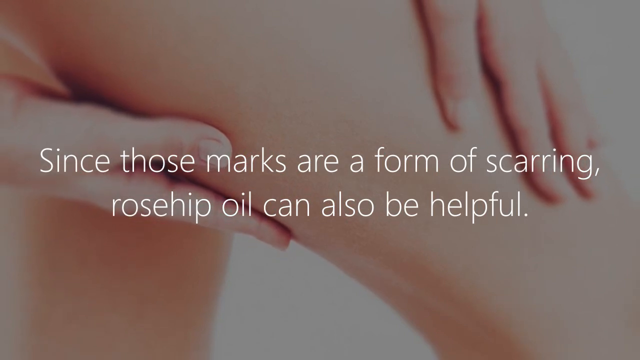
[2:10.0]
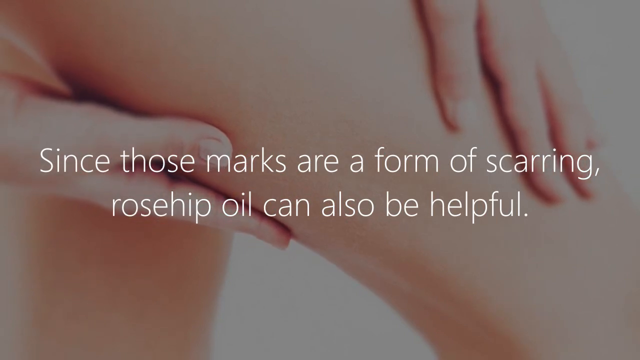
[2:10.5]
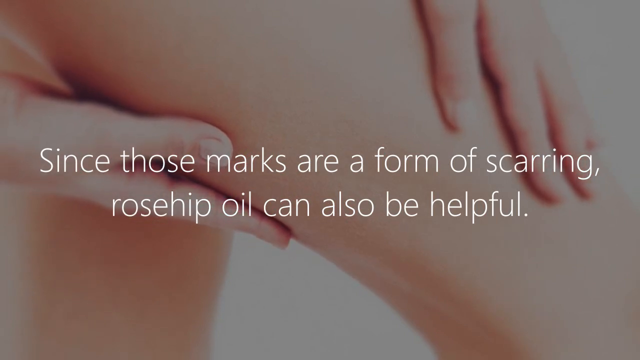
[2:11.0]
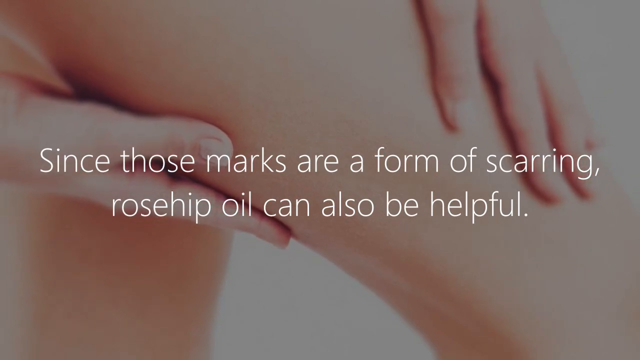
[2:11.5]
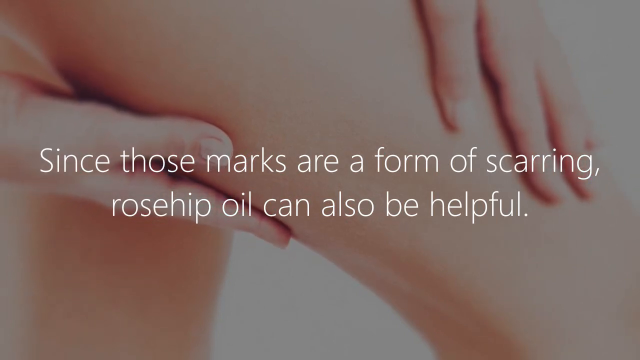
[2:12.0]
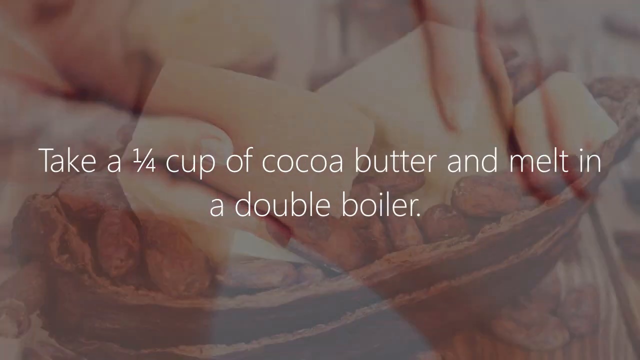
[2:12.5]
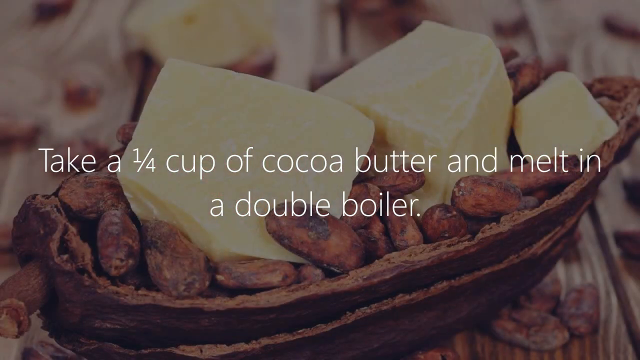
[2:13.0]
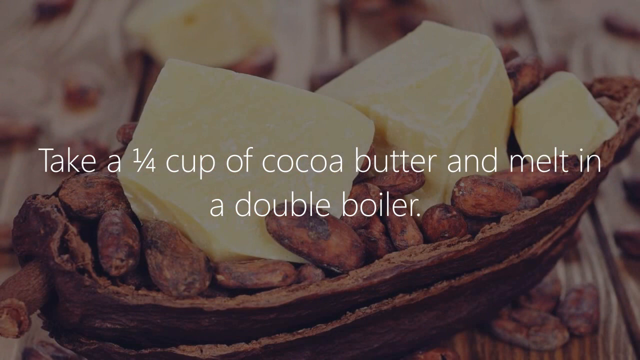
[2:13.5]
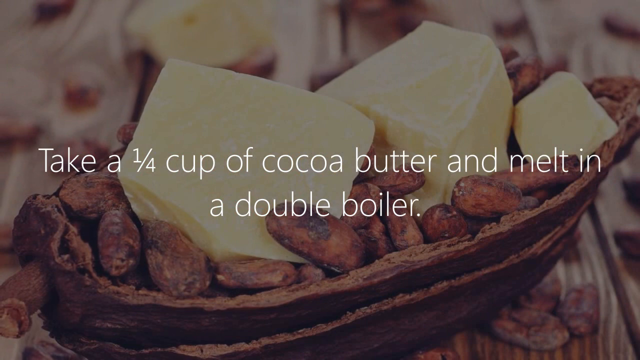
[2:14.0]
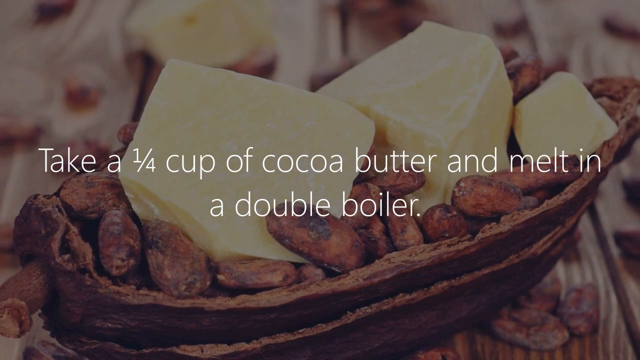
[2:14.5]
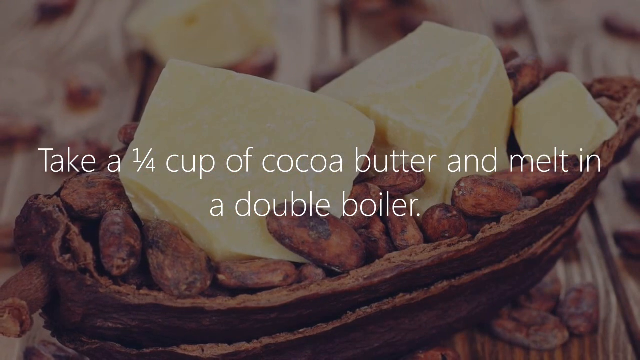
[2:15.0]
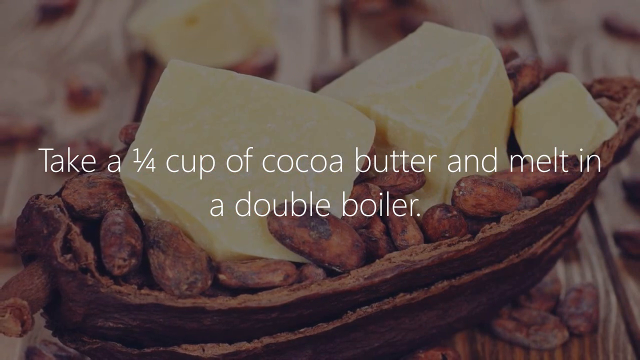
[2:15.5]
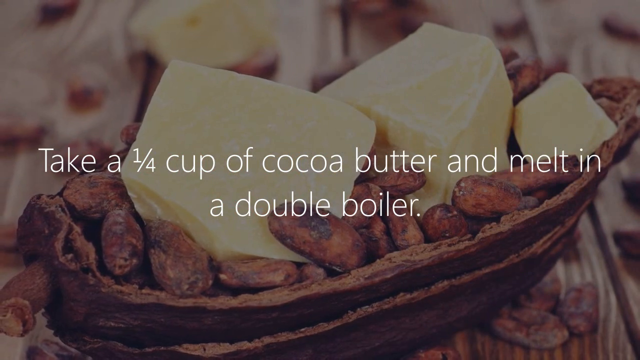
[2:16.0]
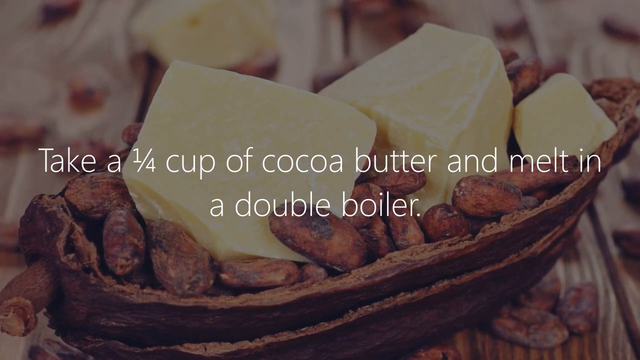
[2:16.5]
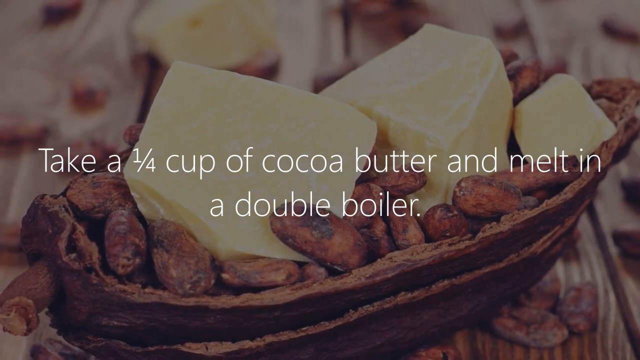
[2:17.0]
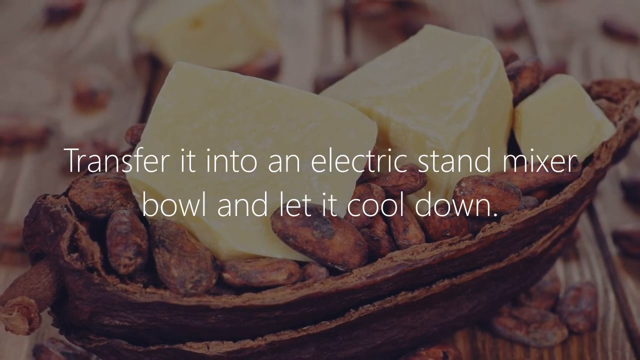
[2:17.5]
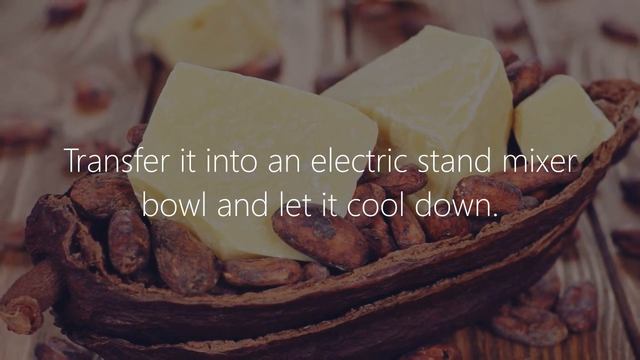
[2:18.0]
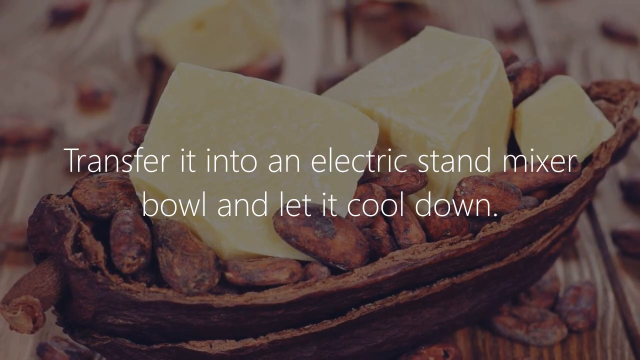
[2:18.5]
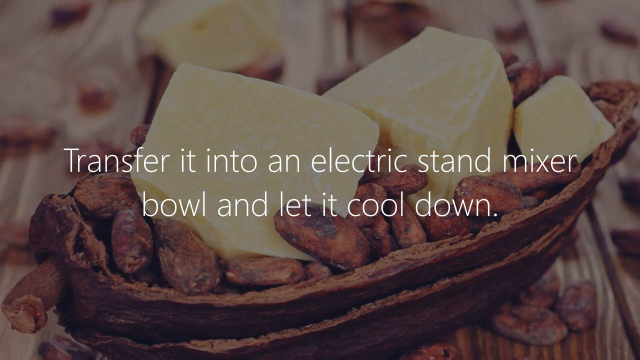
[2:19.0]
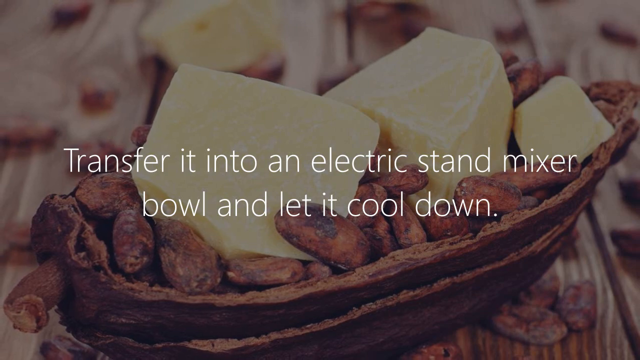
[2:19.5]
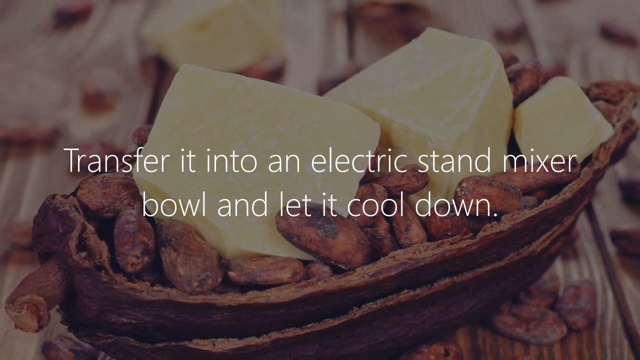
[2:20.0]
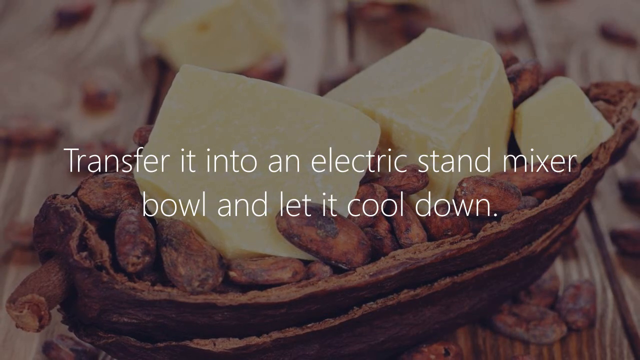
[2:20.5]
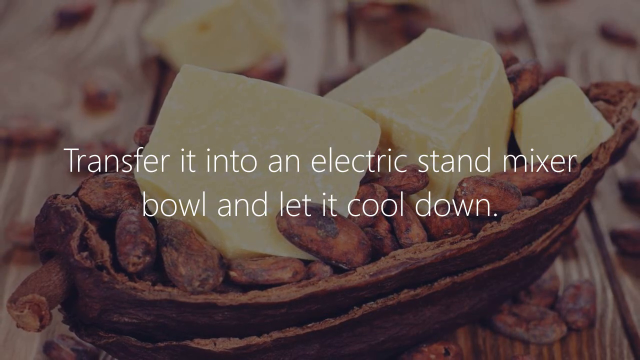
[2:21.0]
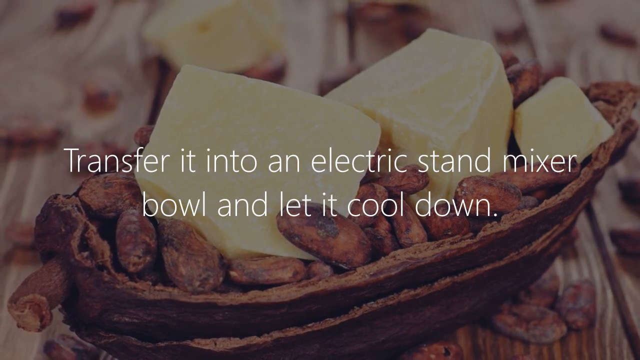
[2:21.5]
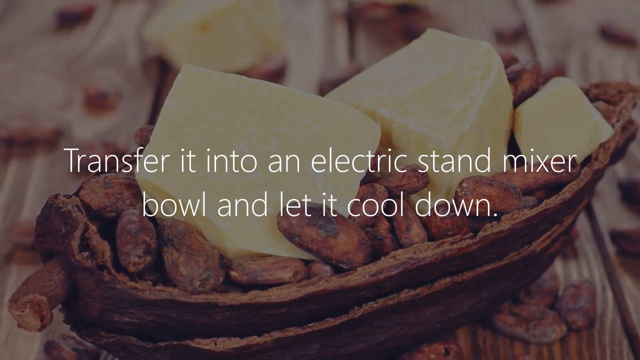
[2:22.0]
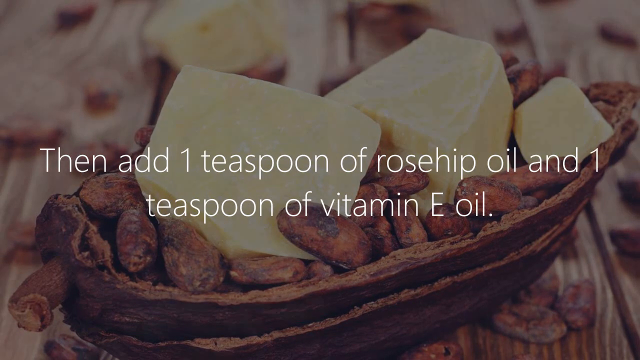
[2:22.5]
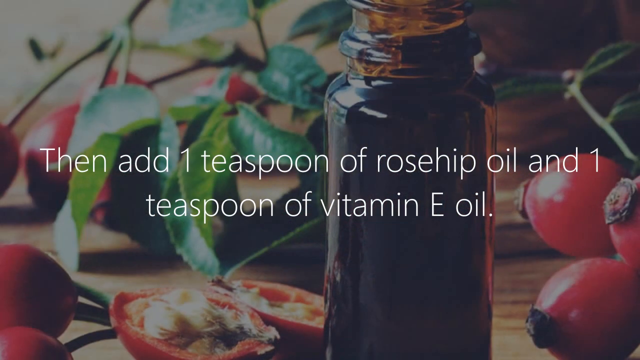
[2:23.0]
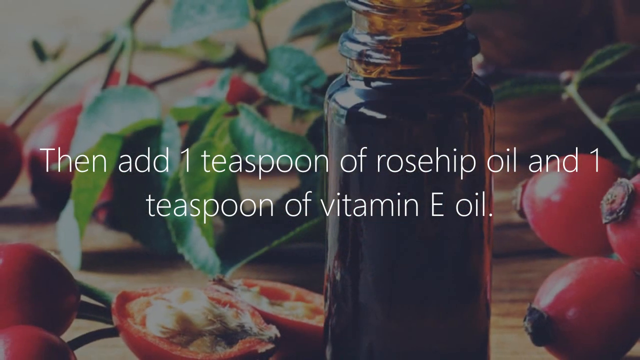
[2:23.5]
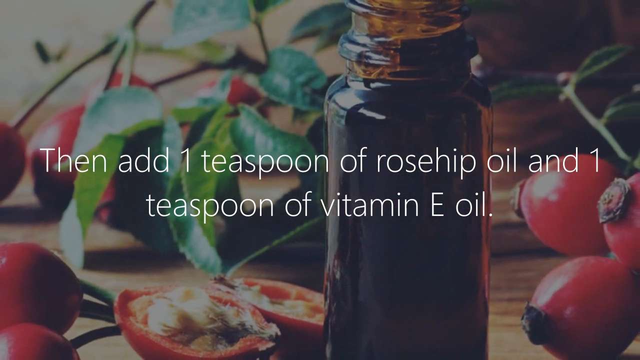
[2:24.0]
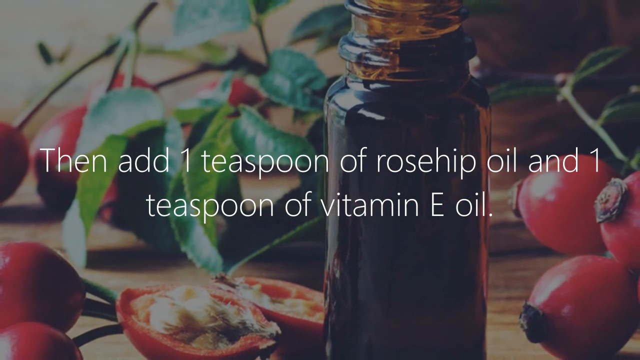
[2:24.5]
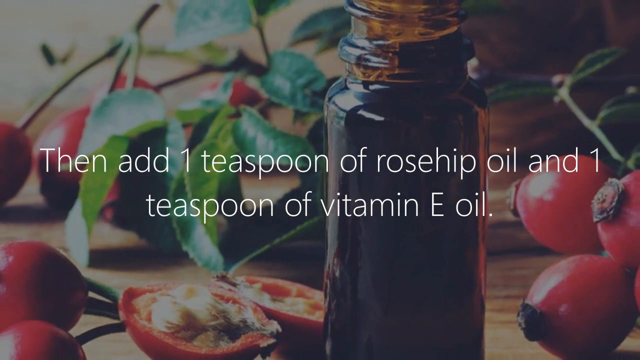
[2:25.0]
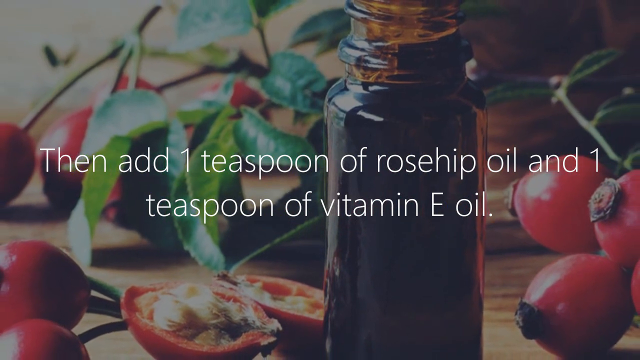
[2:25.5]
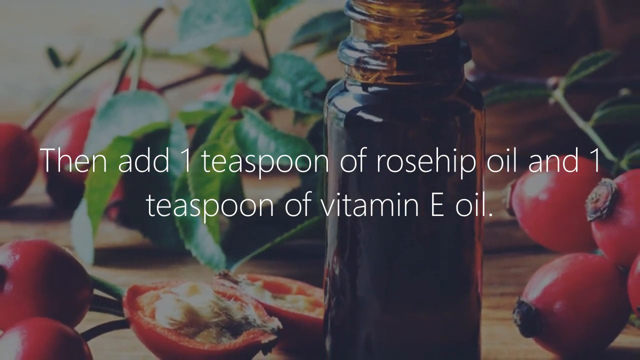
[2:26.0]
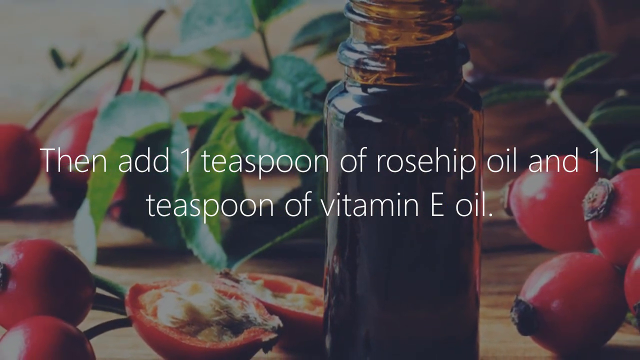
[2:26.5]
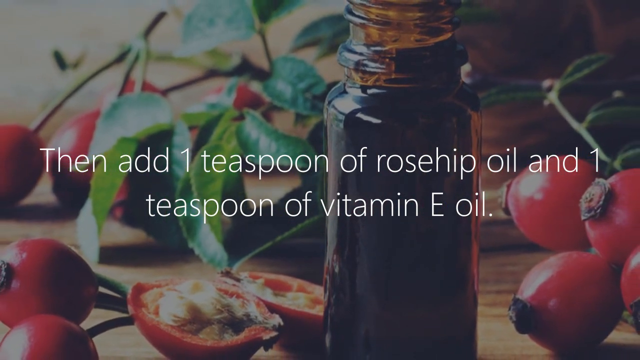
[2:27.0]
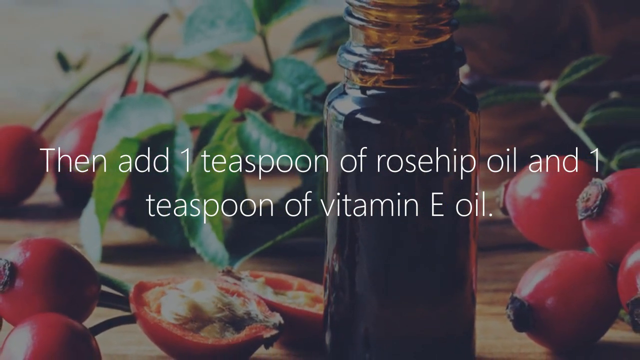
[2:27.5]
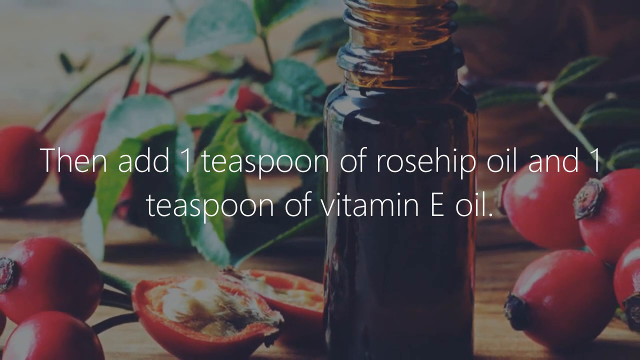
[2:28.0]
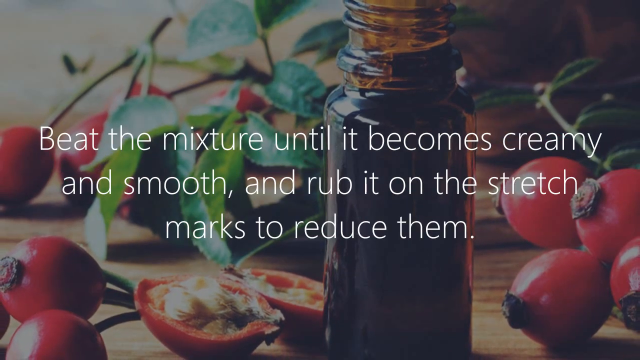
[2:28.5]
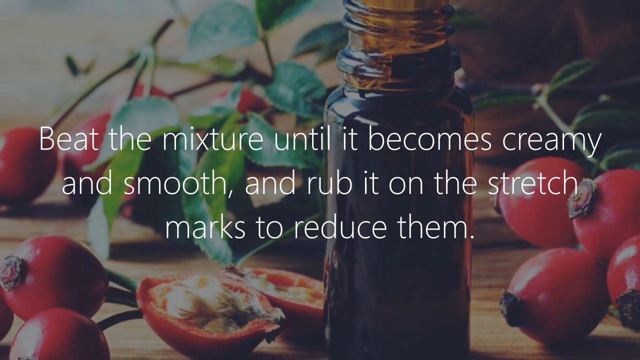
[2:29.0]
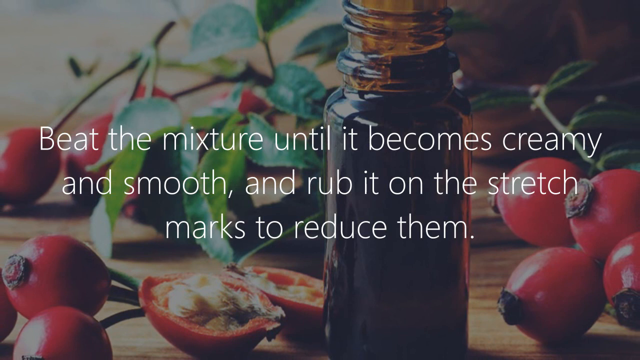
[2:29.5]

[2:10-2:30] The fourth benefit of rosehip oil for skin is presented: anti-aging. The oil contains vitamin E, which prevents premature skin aging, and vitamin C, which boosts collagen production in the skin to maintain its elasticity and suppleness.